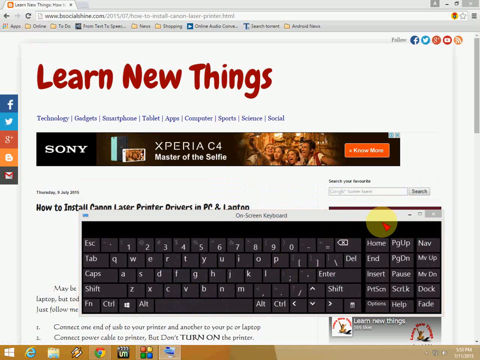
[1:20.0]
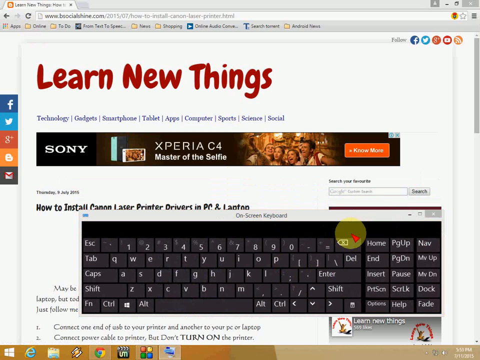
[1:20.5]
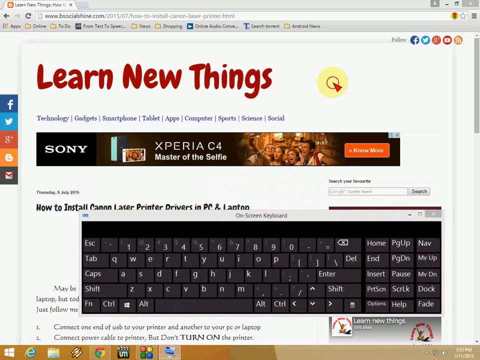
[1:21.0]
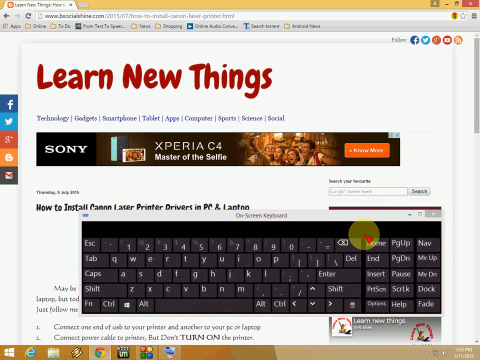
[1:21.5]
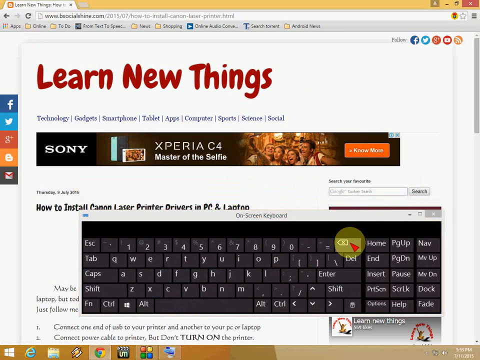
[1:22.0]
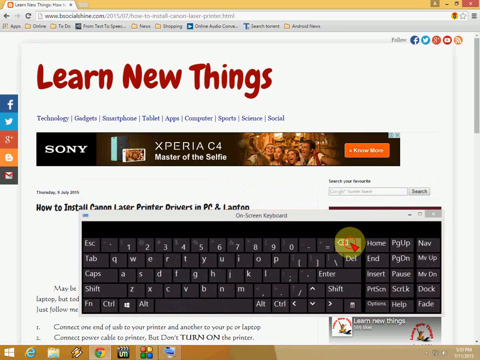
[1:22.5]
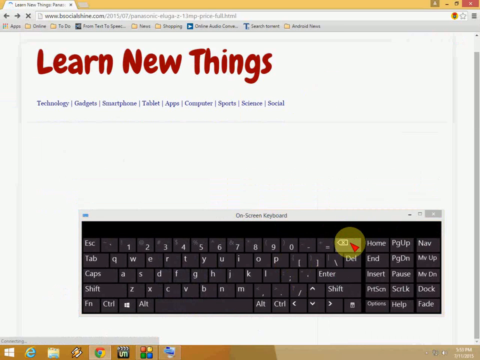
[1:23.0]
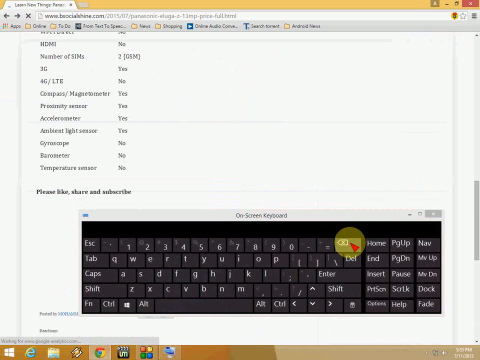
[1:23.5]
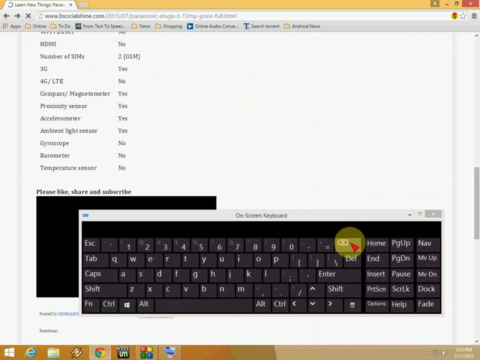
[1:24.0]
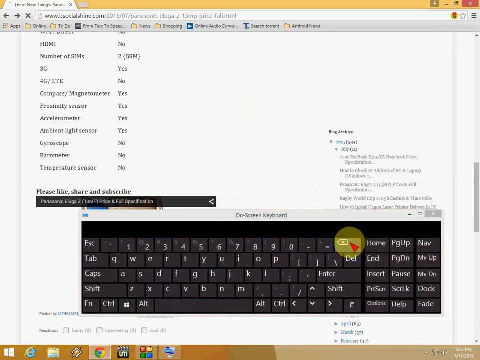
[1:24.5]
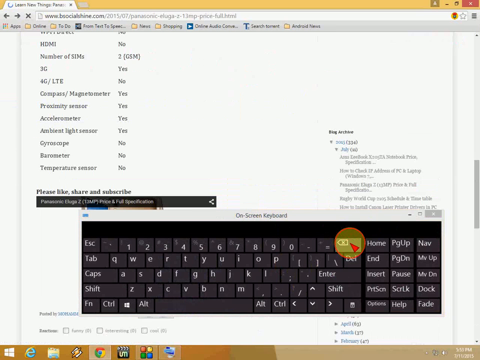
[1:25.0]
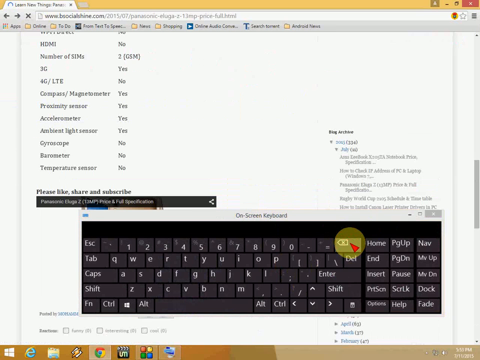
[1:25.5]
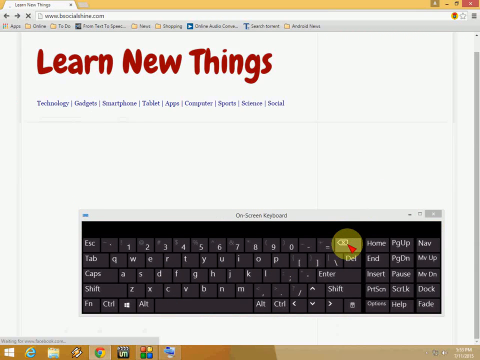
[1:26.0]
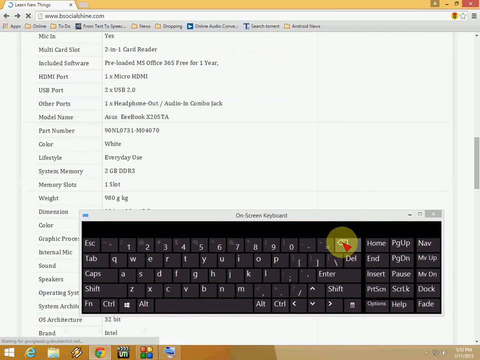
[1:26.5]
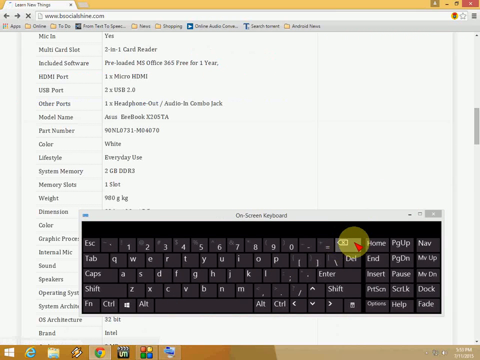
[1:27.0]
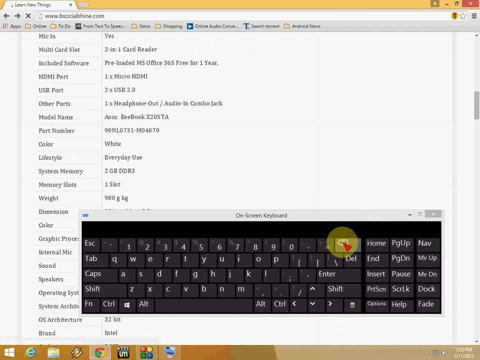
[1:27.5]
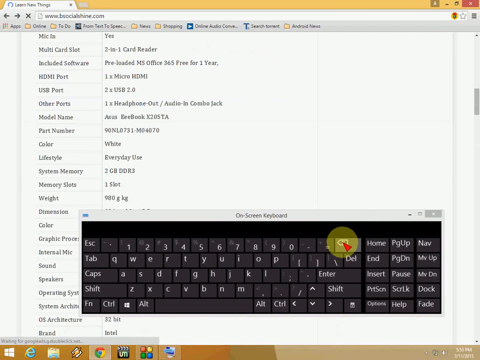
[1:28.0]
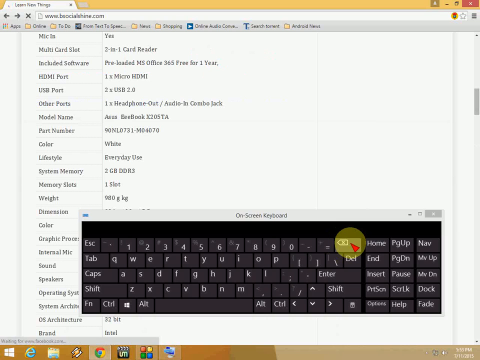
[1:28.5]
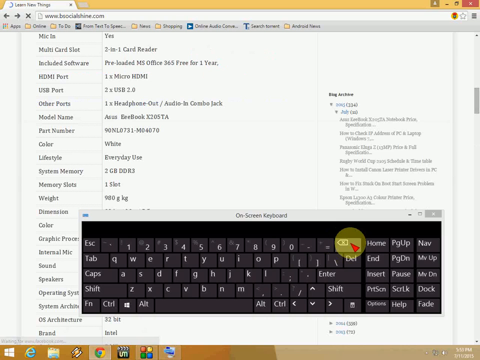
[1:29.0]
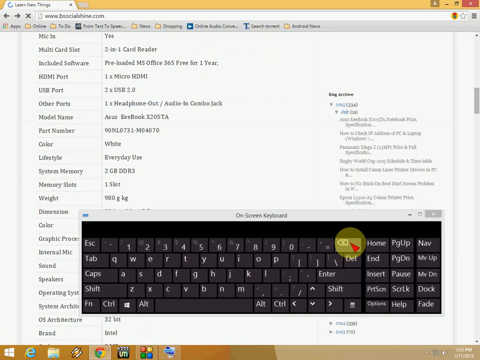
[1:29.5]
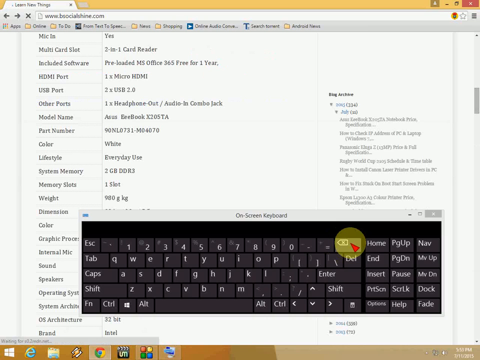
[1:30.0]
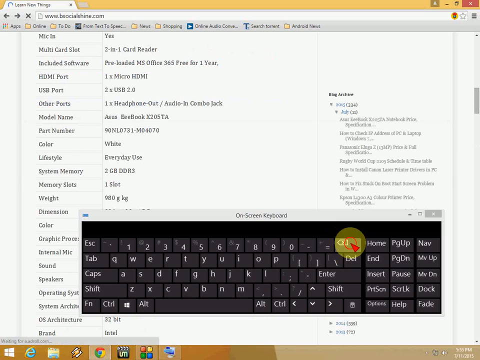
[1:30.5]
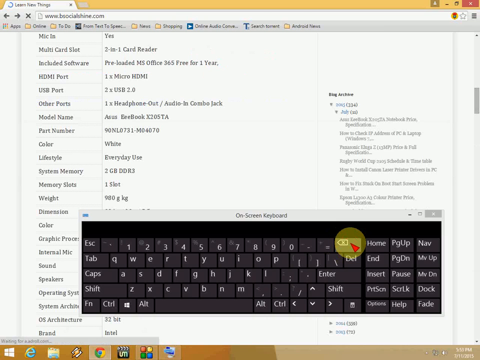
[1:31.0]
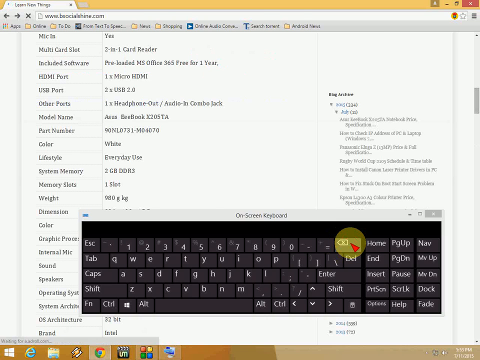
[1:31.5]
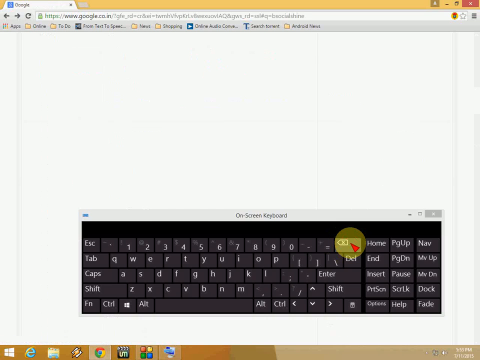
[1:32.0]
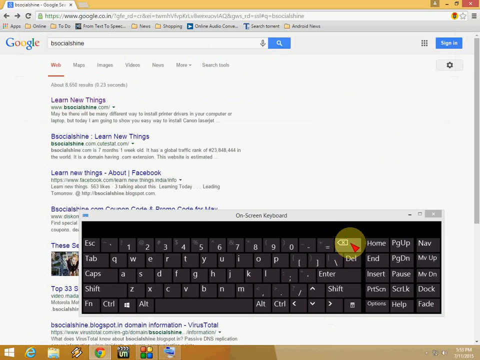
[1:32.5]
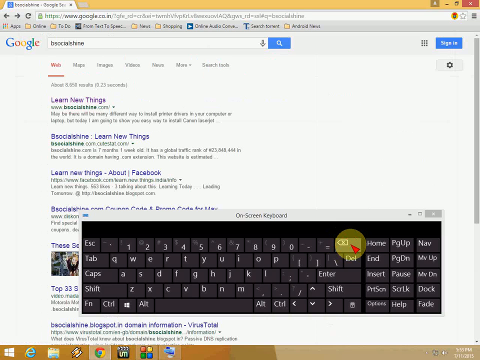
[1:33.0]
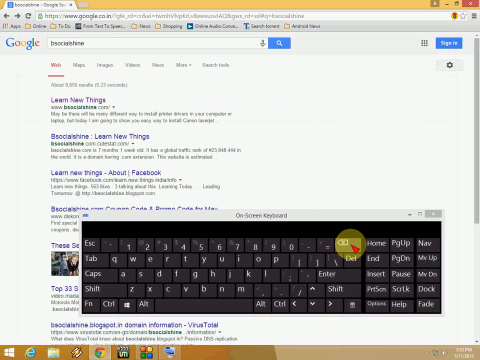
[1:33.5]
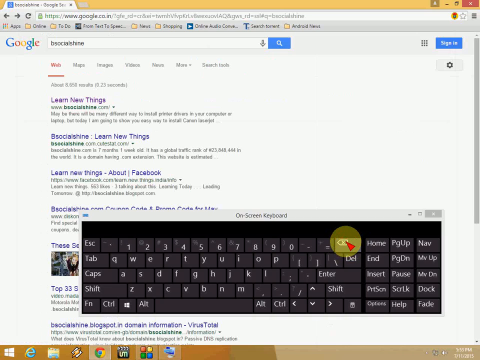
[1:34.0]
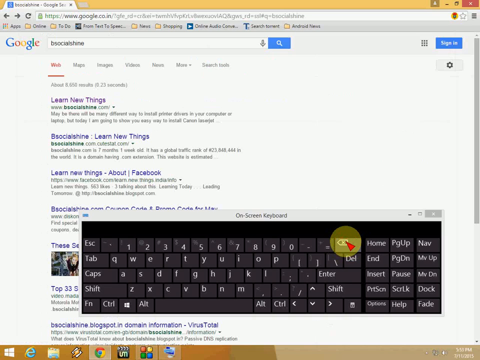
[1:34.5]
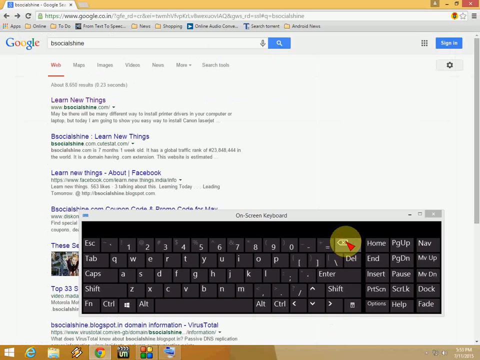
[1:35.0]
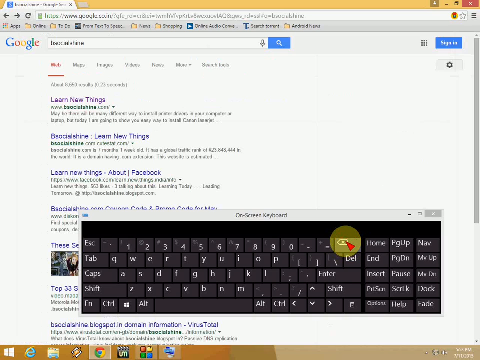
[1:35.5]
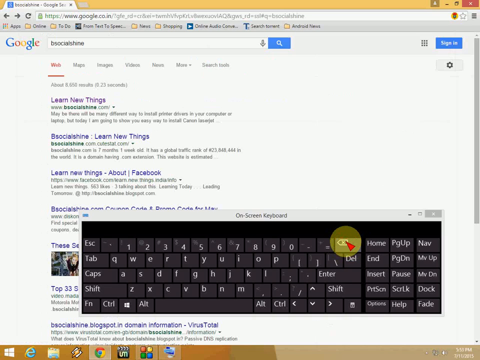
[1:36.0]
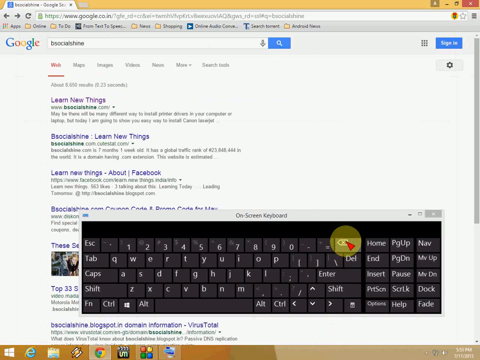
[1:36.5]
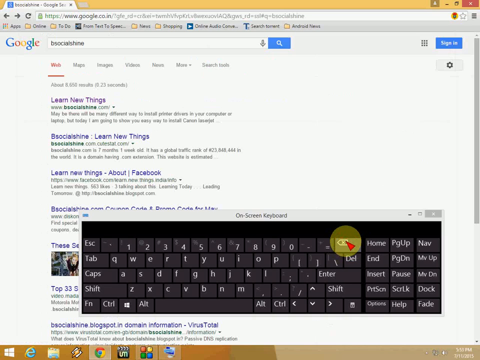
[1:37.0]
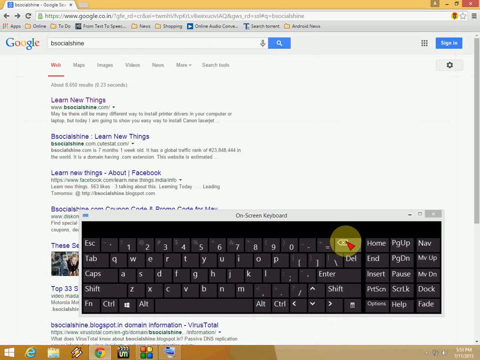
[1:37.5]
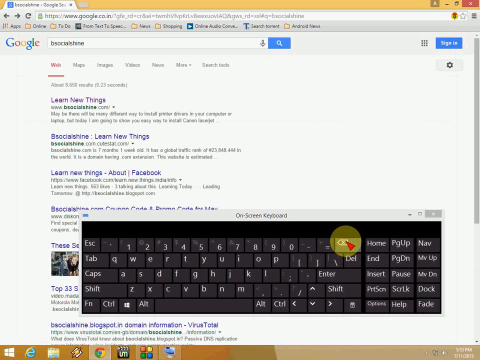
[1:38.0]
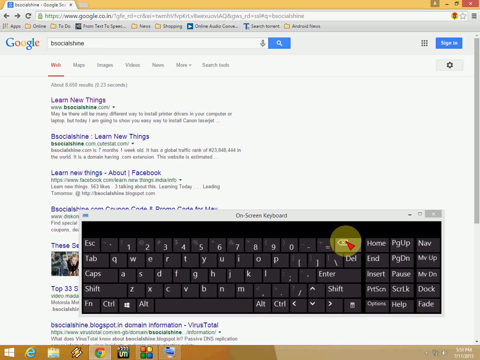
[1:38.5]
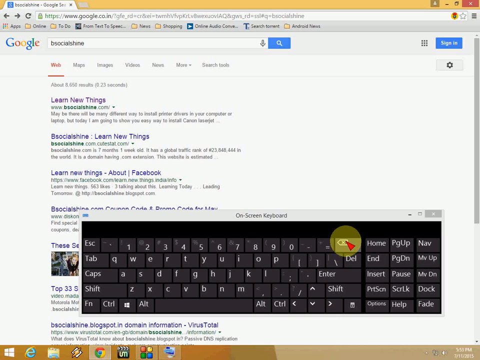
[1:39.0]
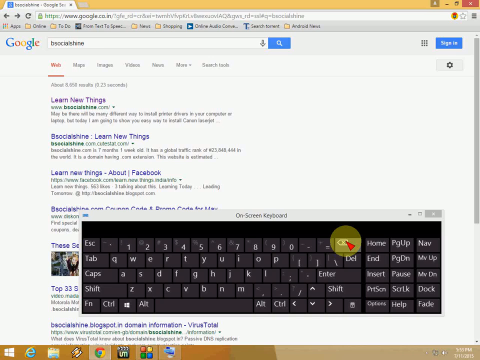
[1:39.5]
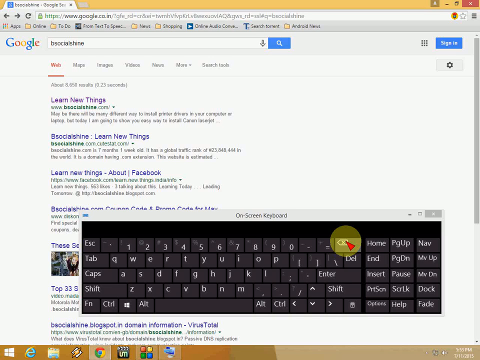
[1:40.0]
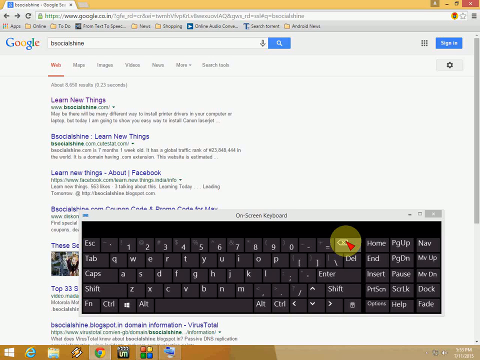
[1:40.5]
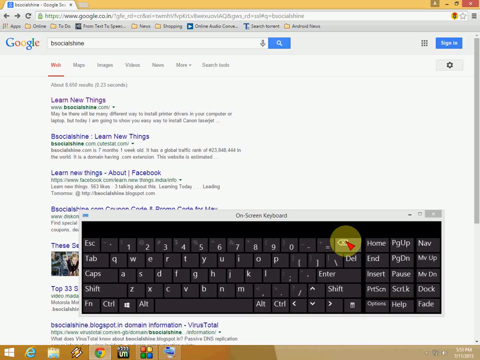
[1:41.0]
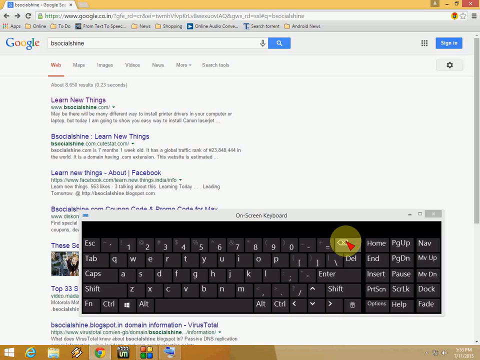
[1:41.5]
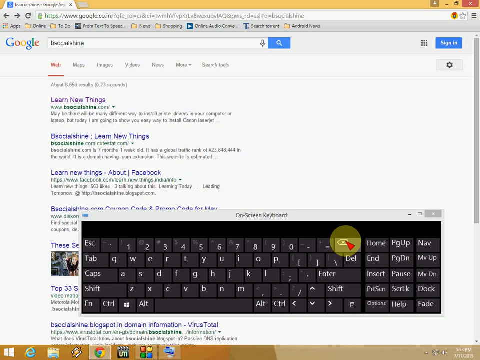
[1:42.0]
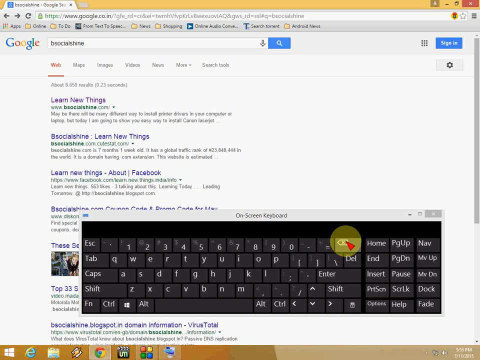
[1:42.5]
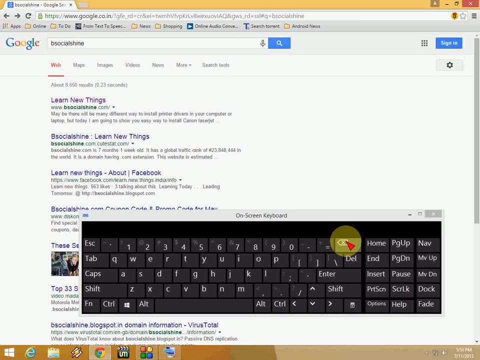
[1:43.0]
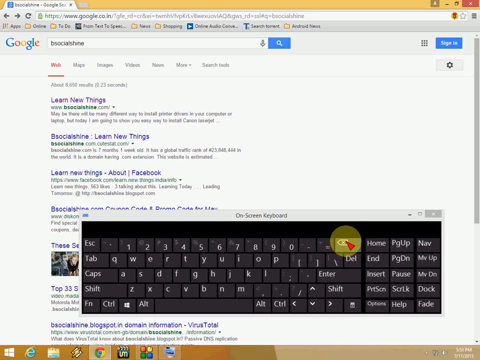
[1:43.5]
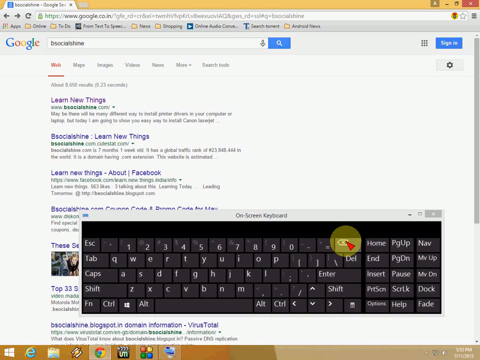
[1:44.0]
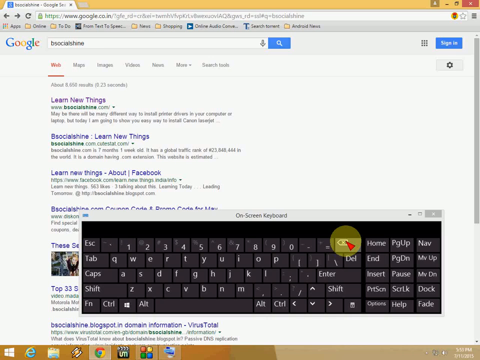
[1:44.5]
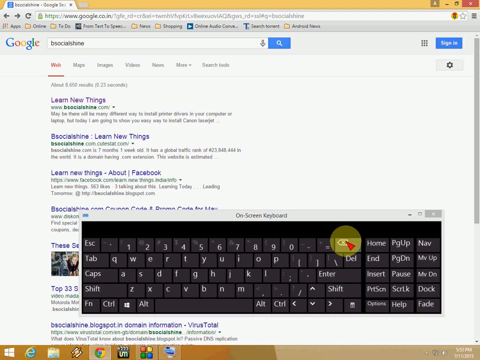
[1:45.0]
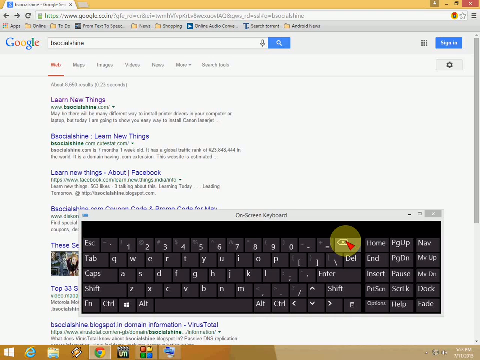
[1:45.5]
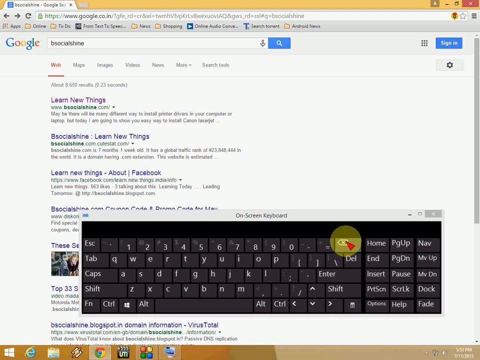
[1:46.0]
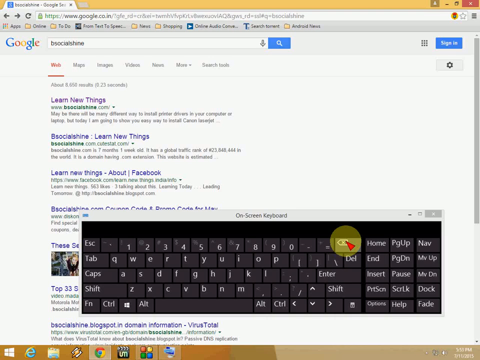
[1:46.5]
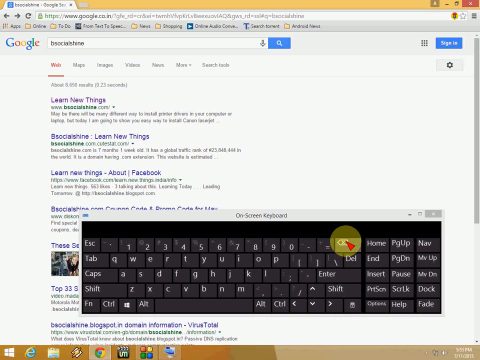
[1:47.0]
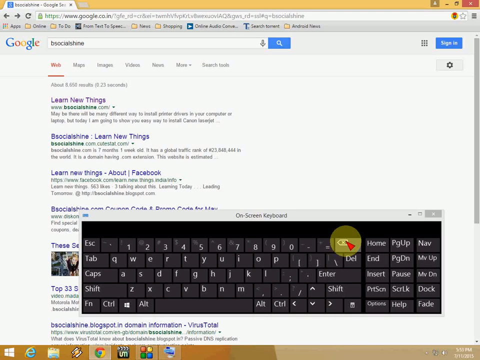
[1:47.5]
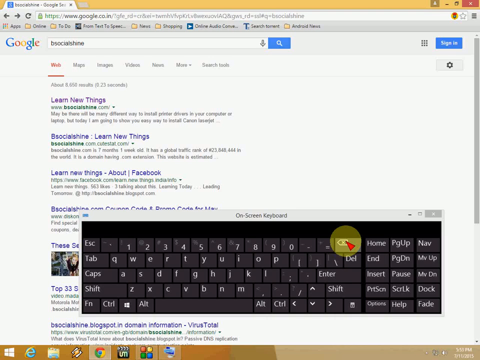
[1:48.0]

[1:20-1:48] The on-screen keyboard is dragged lower down the screen, and then its delete or backspace button is clicked. This acts as a back button, moving the web page back to the Google search page for BeSocial Shine, where the same search results as before are present. The keyboard has its own minimize, fullscreen and close buttons, as well as a block of menu buttons, three wide and five high, on its right-hand side. Starting from the top, the first row reads "Home", "Page Up", "Nav"; the second row "End", "Page Down", "Move Up"; the third row "Insert", "Pause", "Move Down"; the fourth row "Print Screen", "Scroll K", "Dock"; and the bottom row "Options", "Help", "Fade". The video seems to be a demonstration of how to use the on-screen keyboard to navigate web pages in Google Chrome on a Windows laptop.